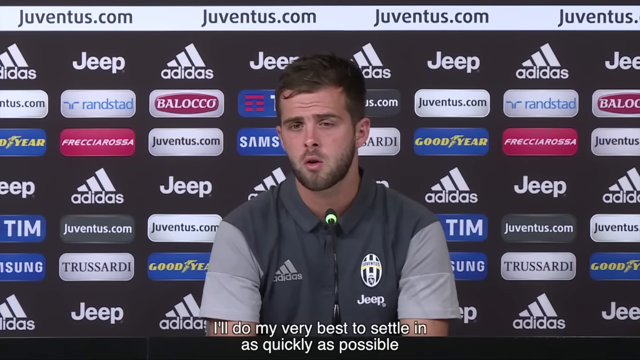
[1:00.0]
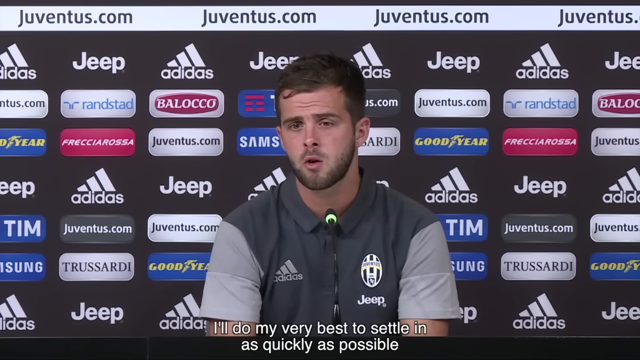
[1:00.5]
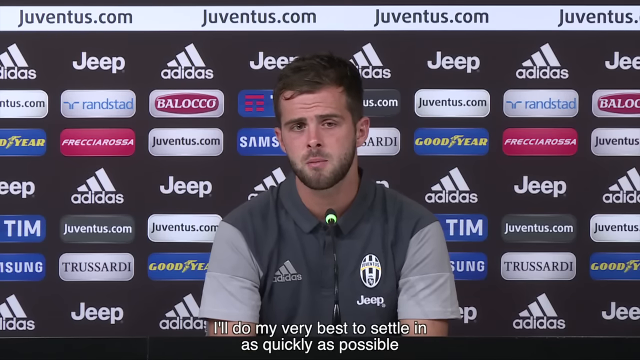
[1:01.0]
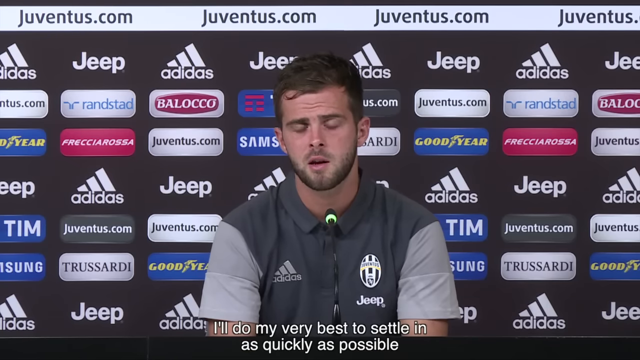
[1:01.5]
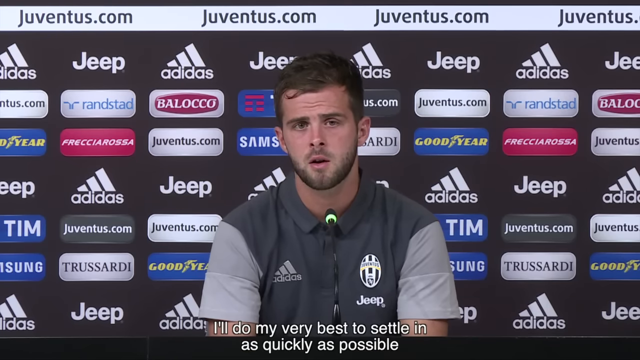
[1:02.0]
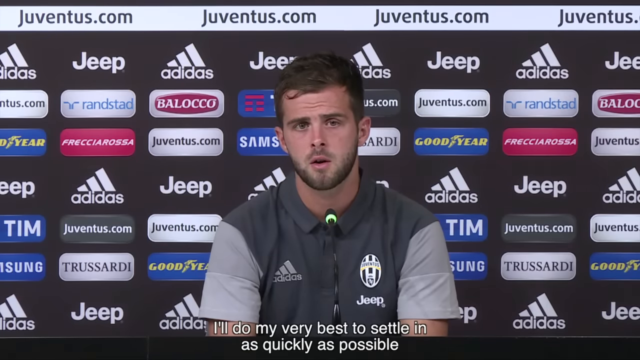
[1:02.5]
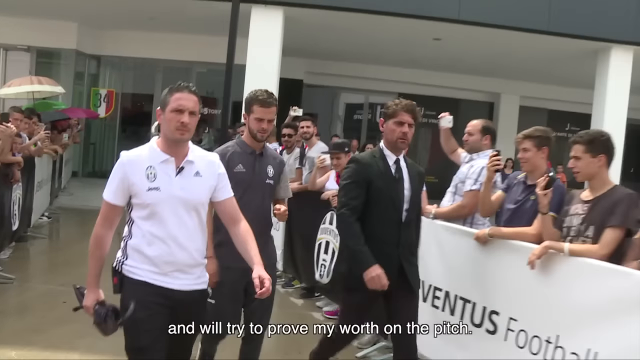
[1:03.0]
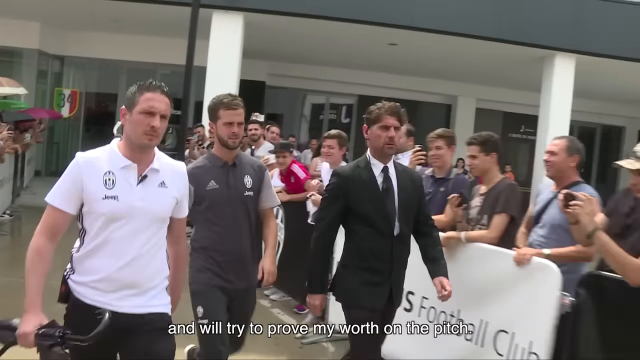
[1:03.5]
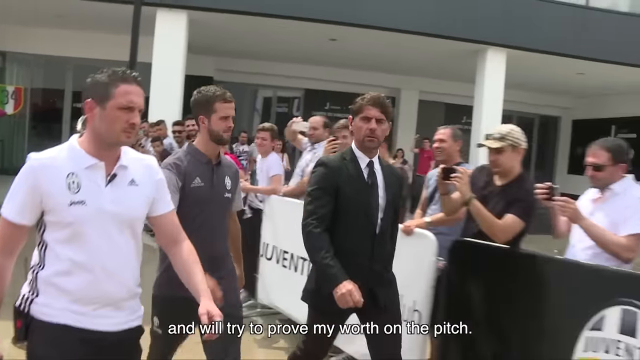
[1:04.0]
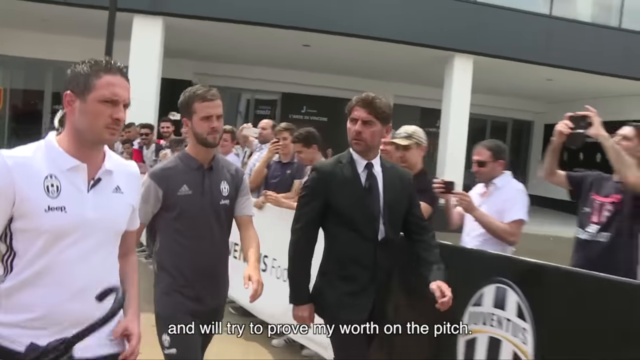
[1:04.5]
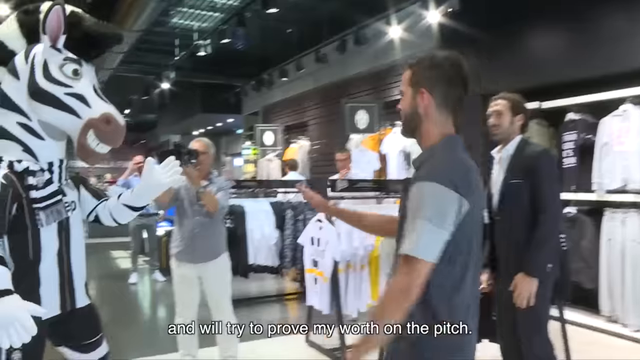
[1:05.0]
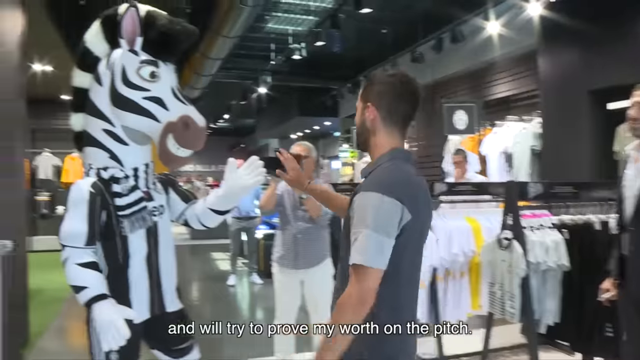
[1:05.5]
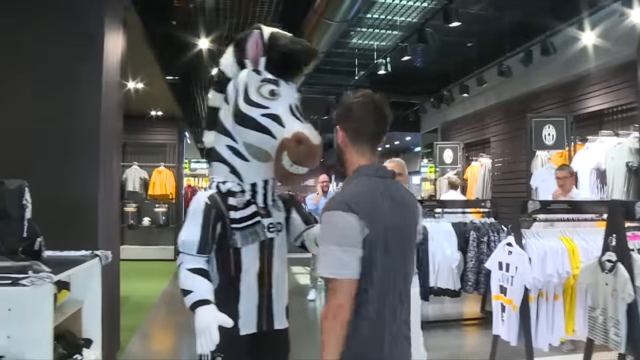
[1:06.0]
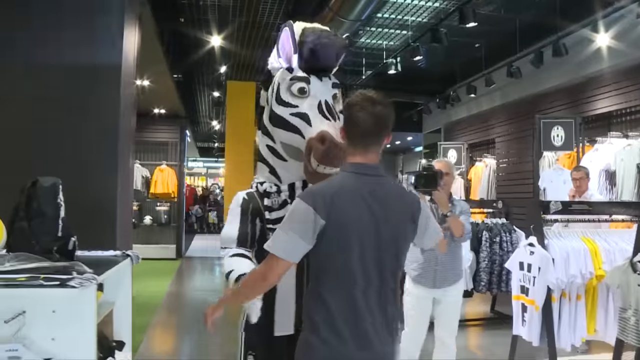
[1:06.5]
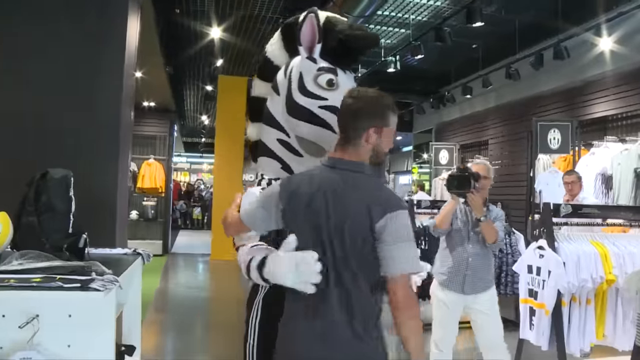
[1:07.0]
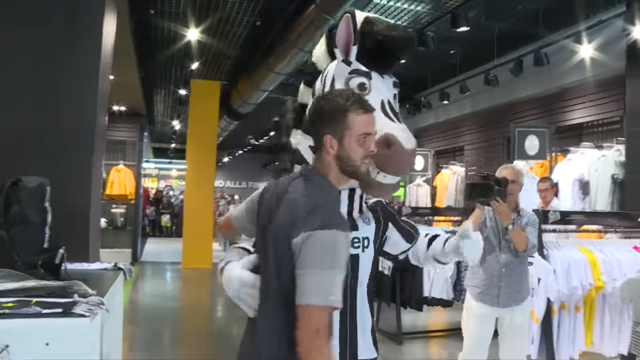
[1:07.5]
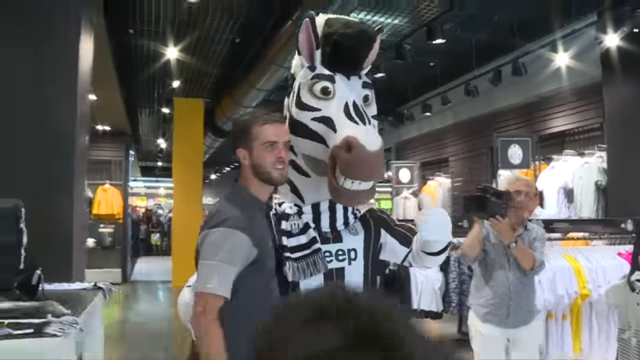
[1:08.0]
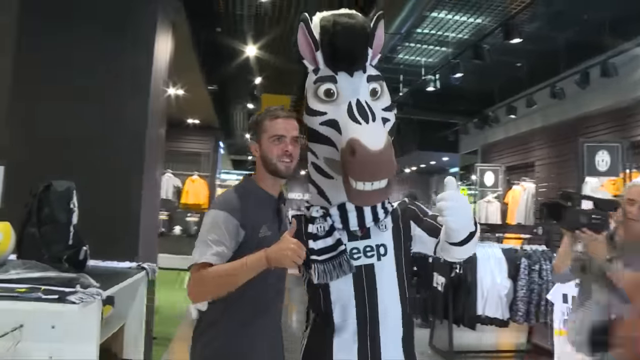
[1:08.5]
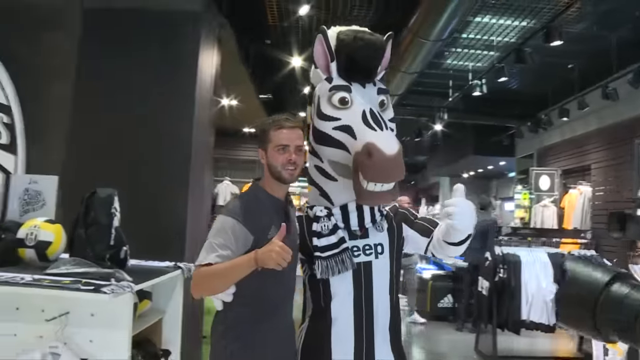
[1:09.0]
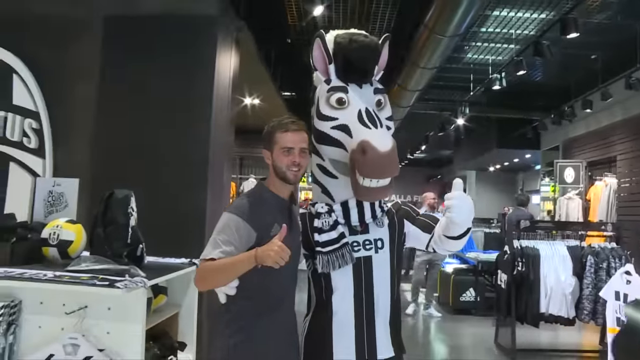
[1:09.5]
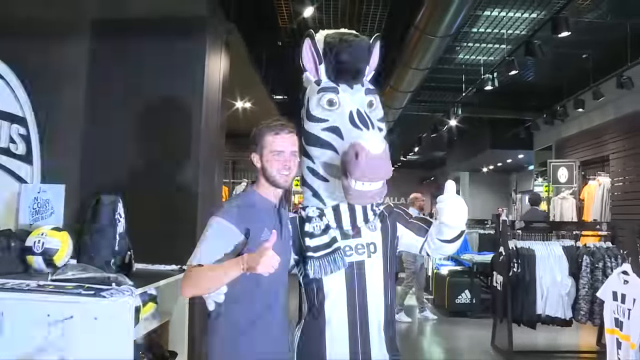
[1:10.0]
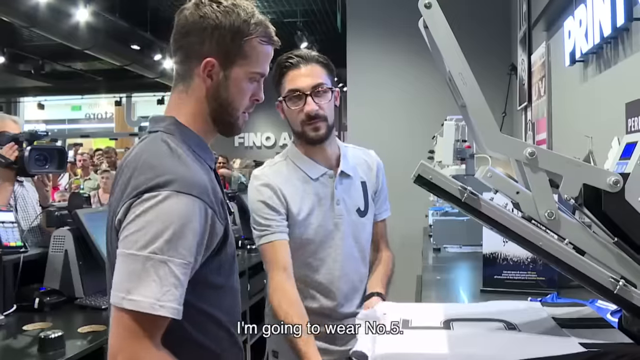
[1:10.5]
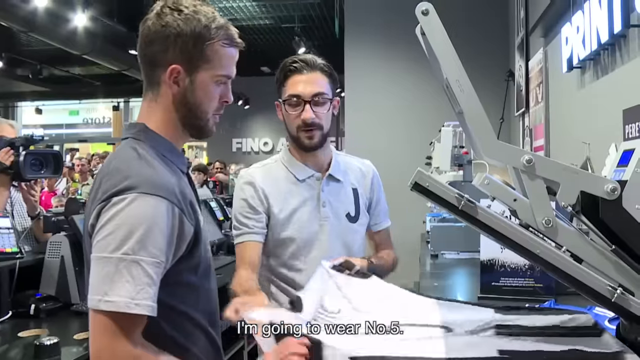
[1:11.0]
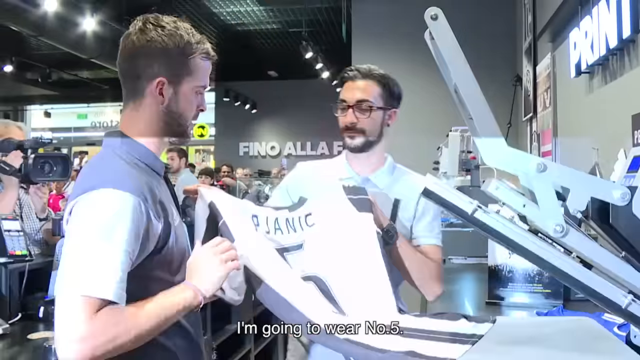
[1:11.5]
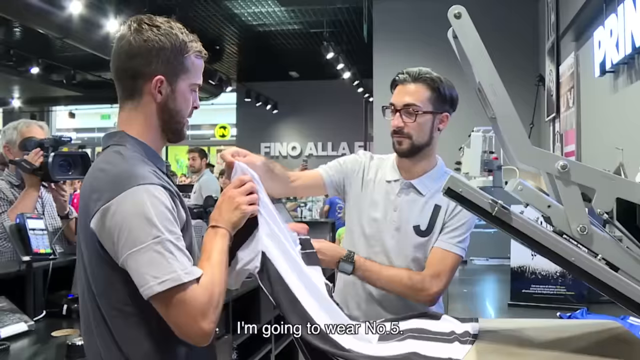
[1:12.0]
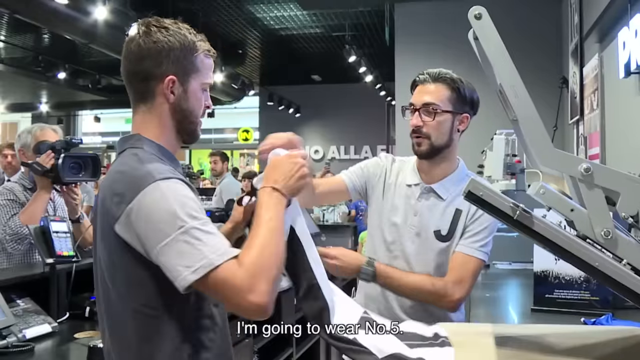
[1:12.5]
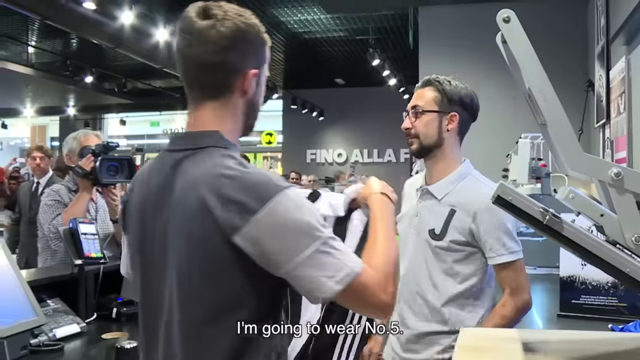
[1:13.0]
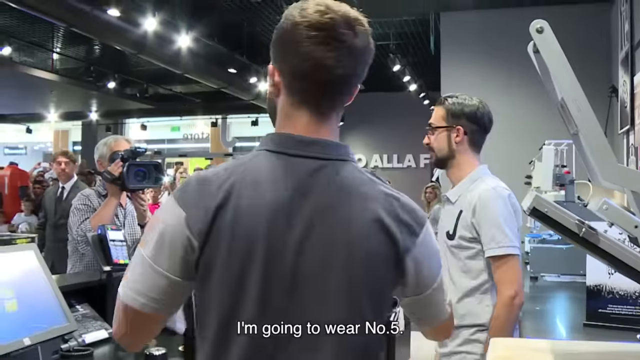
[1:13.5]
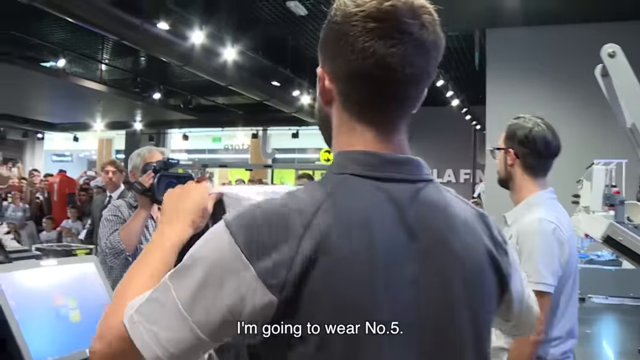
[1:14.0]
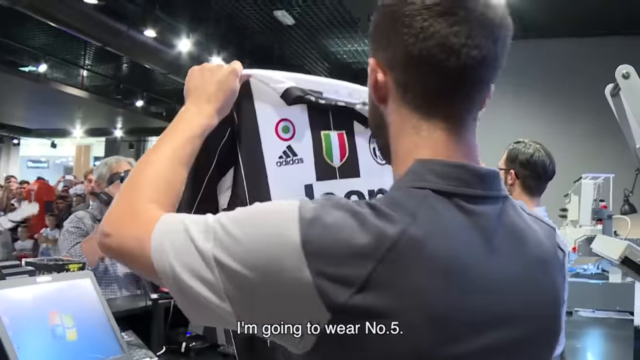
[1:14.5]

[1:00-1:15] The man sits at the podium at the press conference. He has short black hair and a short black beard and wears a black shirt with an Adidas and a Jeep logo on the chest. Behind him is a black wall with many different advertisements, such as Jeep, Adidas, Goodyear and many others. After he speaks for several seconds, the scene moves outside, where the man walks with two other men, one wearing a full suit and the other a white polo. They walk by a crowd of fans who watch them and take pictures of them. Next, the soccer player appears to be in an indoor complex, where he embraces a large zebra mascot; they hug and take a picture giving a thumbs-up sign. The player then holds up a white jersey to show the cameras.